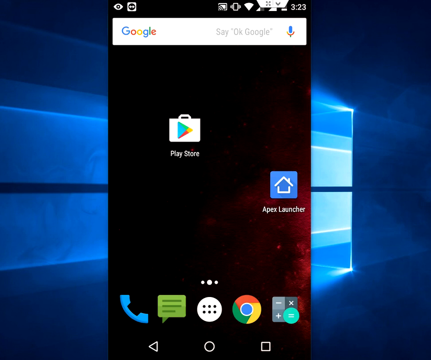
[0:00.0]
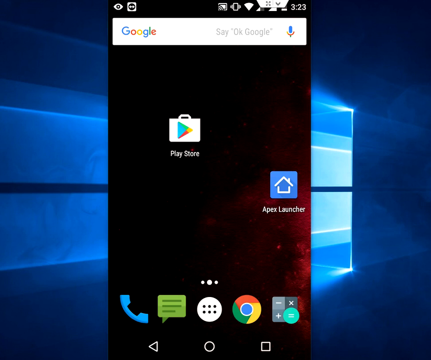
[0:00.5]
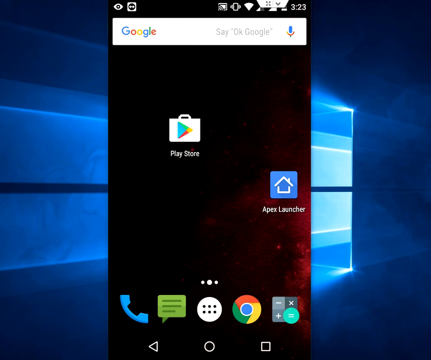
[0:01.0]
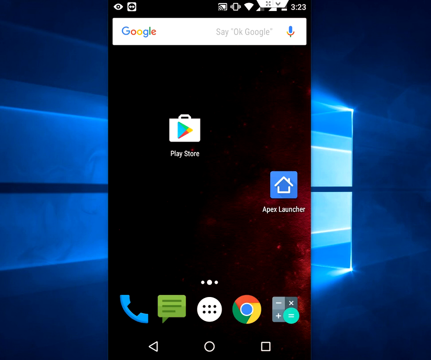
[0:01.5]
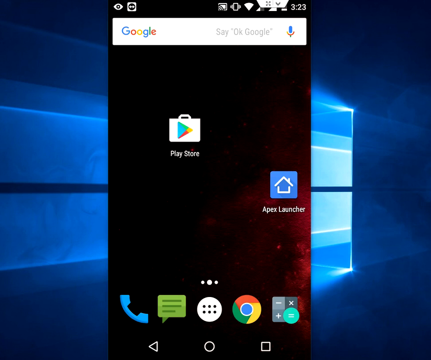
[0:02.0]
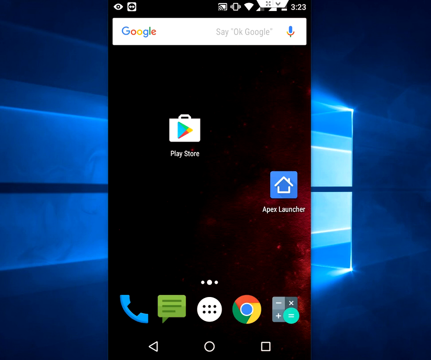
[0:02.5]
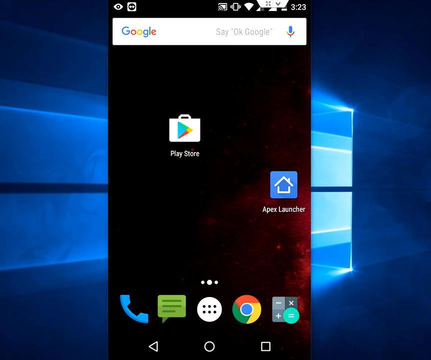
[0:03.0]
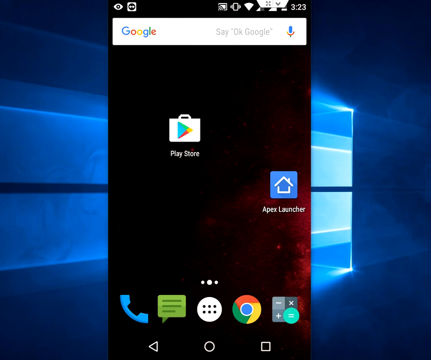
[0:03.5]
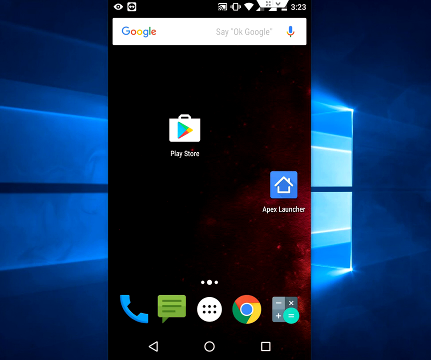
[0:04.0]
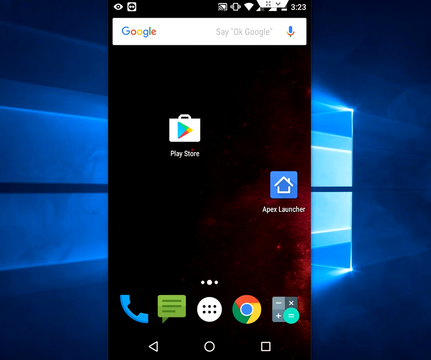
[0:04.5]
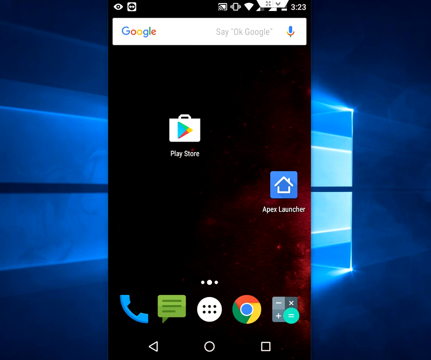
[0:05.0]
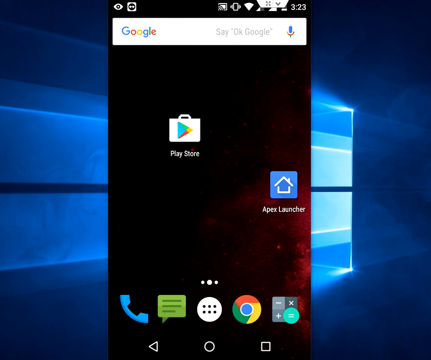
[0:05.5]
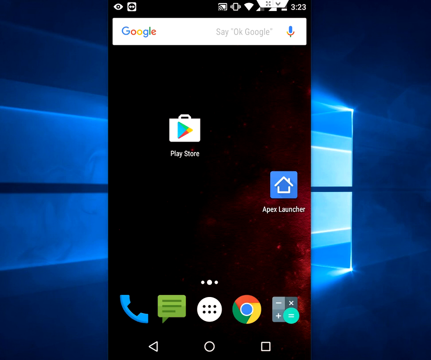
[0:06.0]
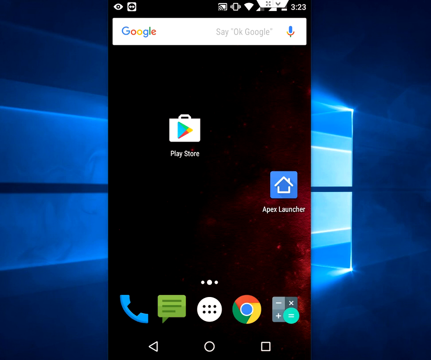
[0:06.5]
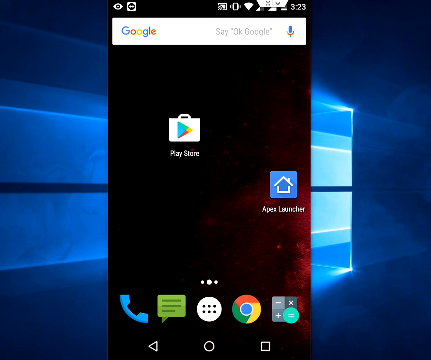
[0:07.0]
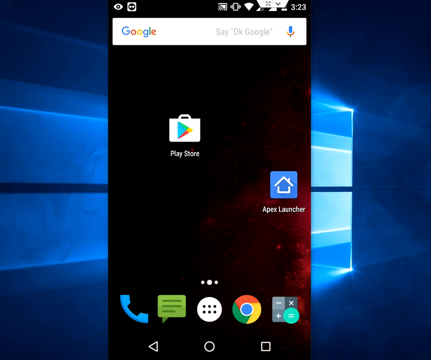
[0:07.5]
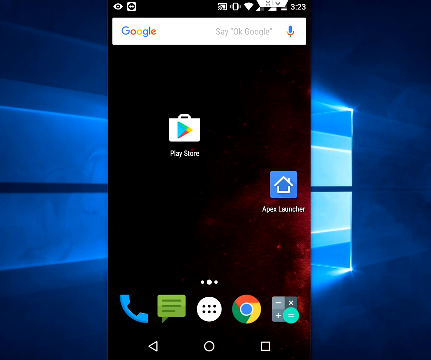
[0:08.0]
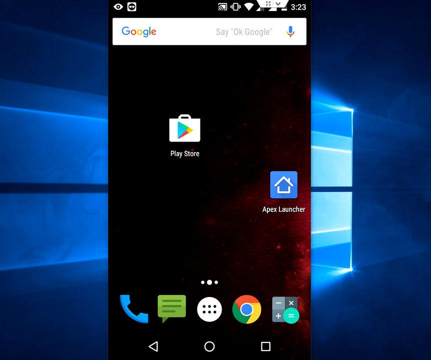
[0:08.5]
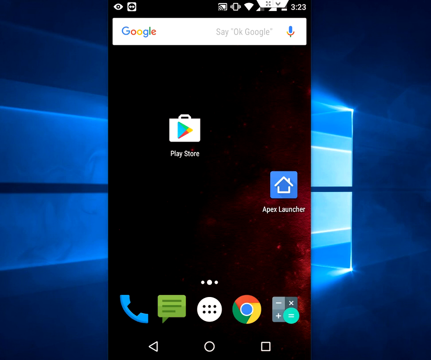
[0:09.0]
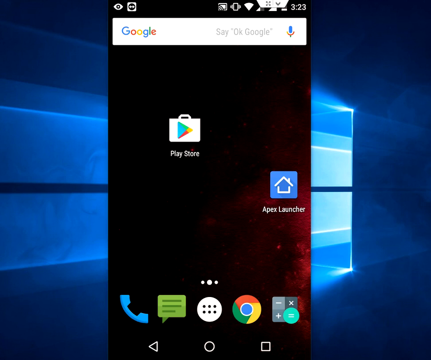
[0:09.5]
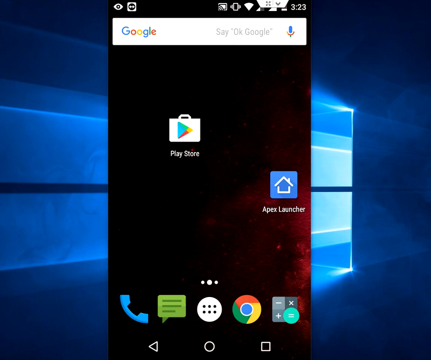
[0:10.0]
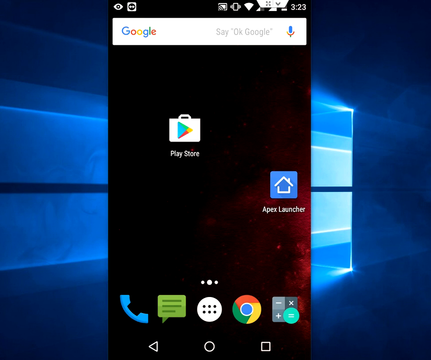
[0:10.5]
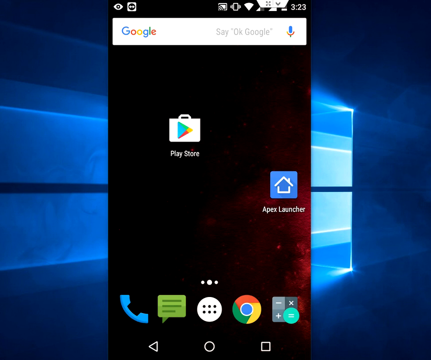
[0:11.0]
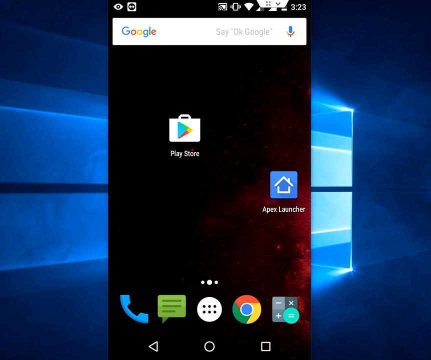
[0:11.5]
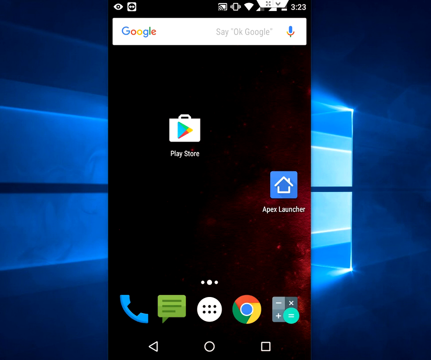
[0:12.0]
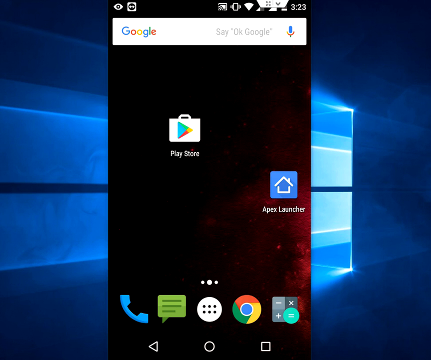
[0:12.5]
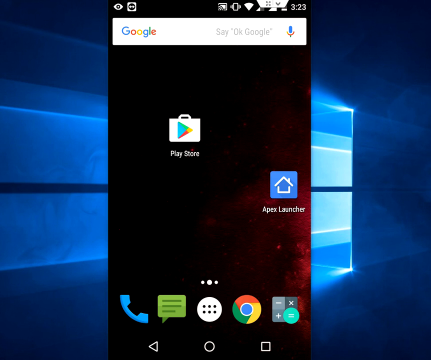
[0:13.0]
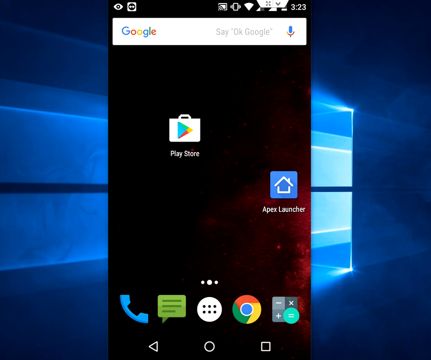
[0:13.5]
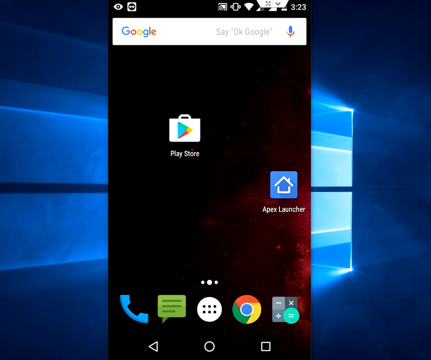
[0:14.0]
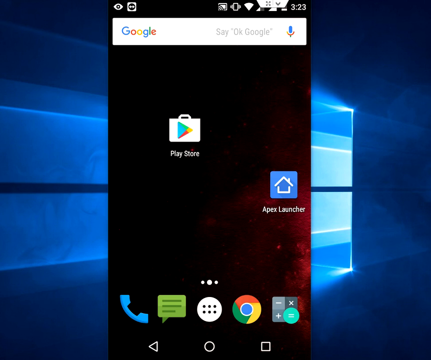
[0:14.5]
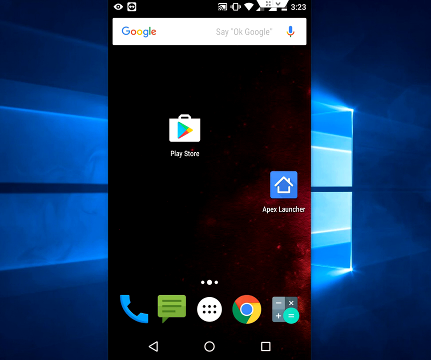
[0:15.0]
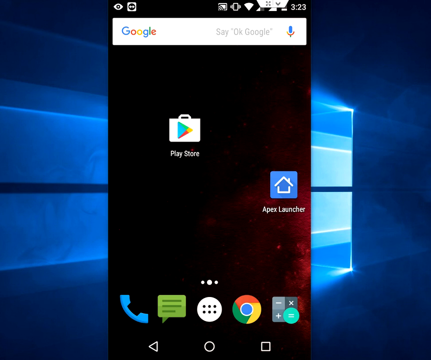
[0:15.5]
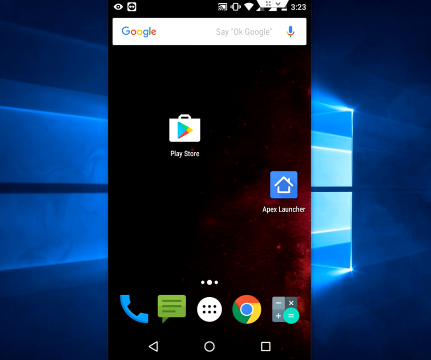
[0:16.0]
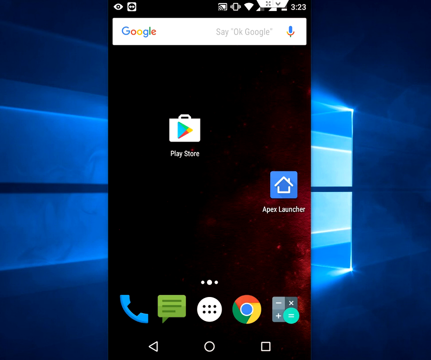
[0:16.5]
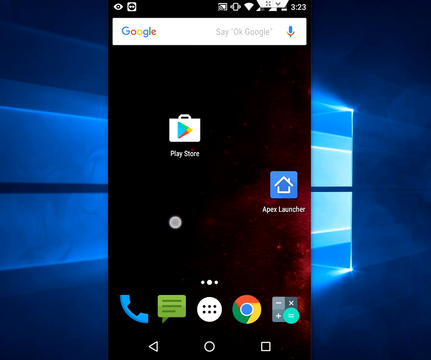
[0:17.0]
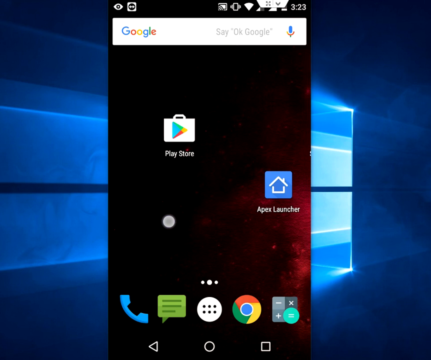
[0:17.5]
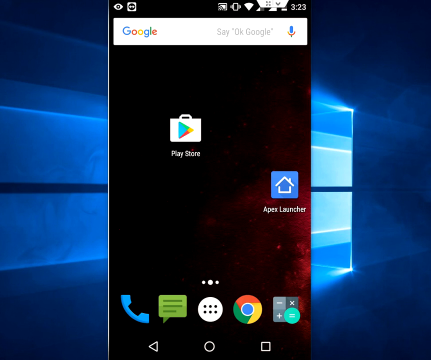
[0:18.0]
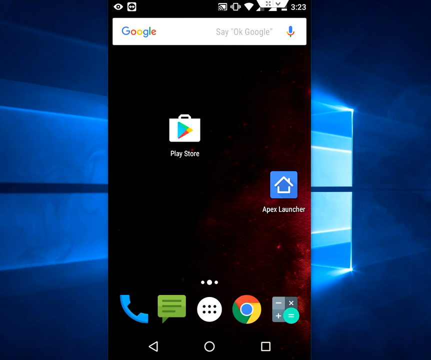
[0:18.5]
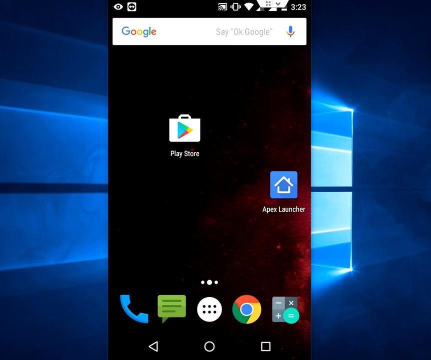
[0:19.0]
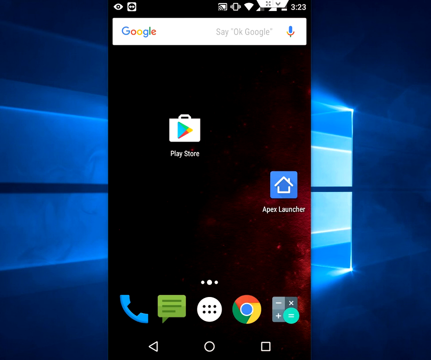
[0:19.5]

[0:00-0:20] An Android phone's screen is shown, with a Google search bar at the top and the time reading 3:23. The only apps visible in the app section are the Play Store, on the second row in the second spot, and Apex Launcher, on the third row in the fourth slot. Below that are the phone call button on the left, the text message button second, six dots arranged in two rows of three in the middle, a Google Chrome logo, and a calculator logo. For a while the user does not do anything. Near the end, the screen is moved left and right a bit, only partially, so the start of a transition appears but the screen stays the same and only the edge changes a little. In the top left corner there is an icon of a single eyeball, and a second icon, apparently for incognito mode, that looks like a man wearing glasses inside a white square.